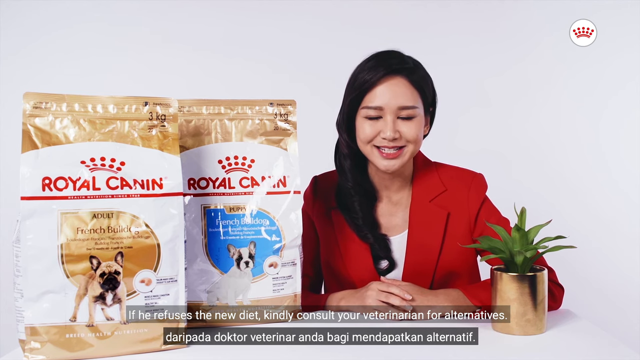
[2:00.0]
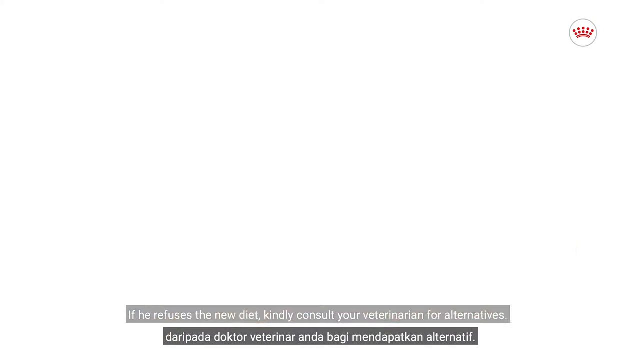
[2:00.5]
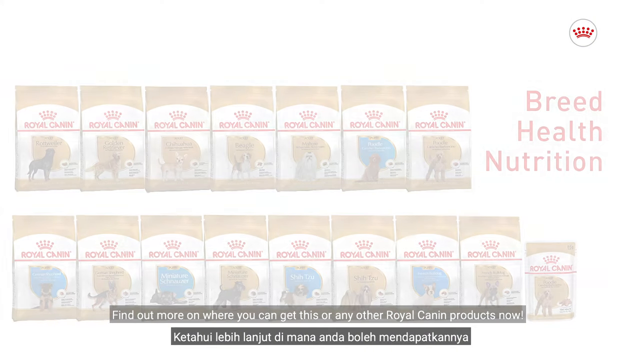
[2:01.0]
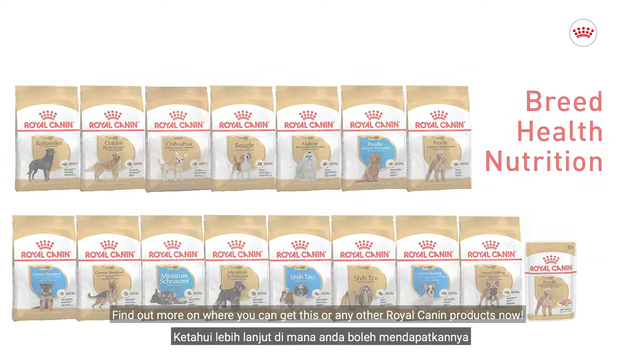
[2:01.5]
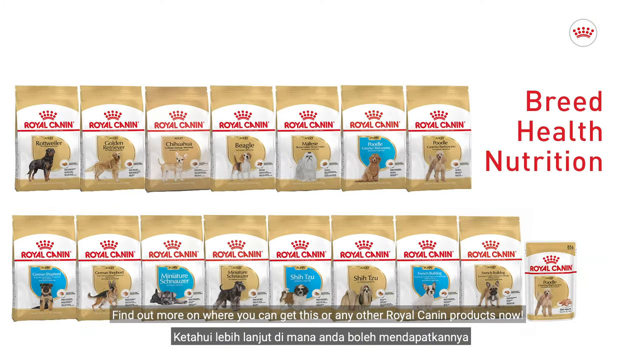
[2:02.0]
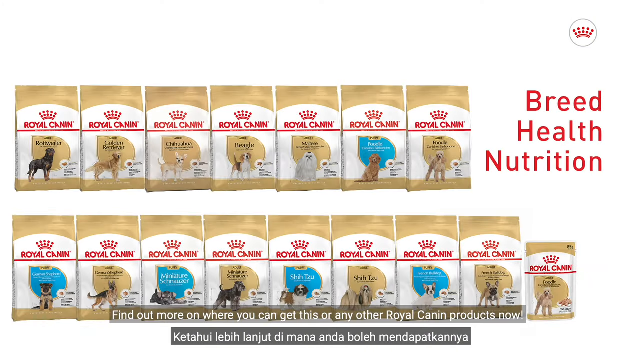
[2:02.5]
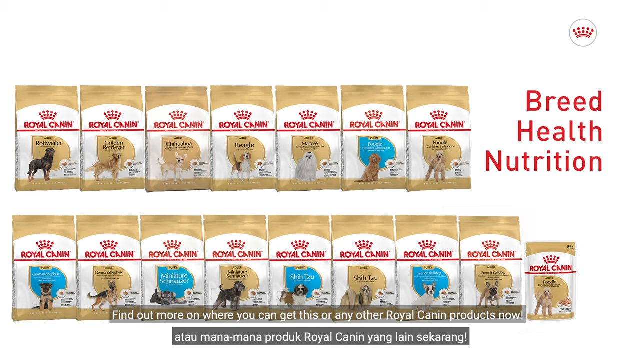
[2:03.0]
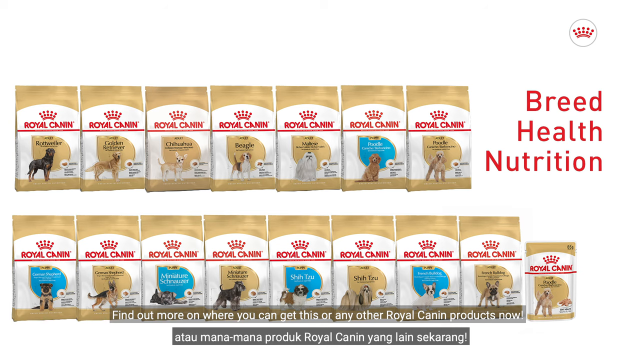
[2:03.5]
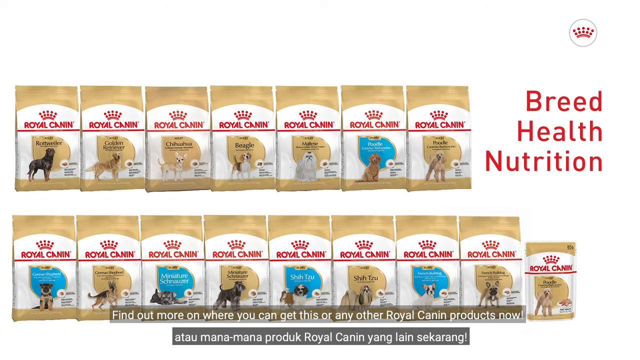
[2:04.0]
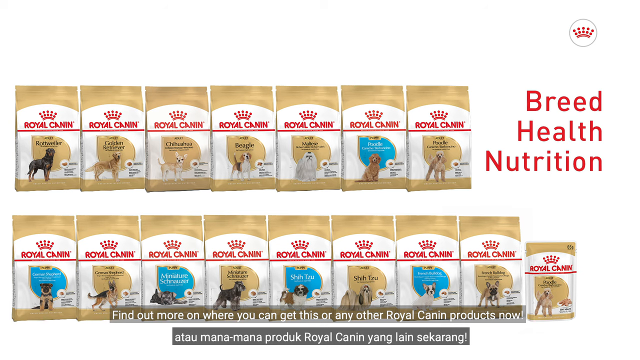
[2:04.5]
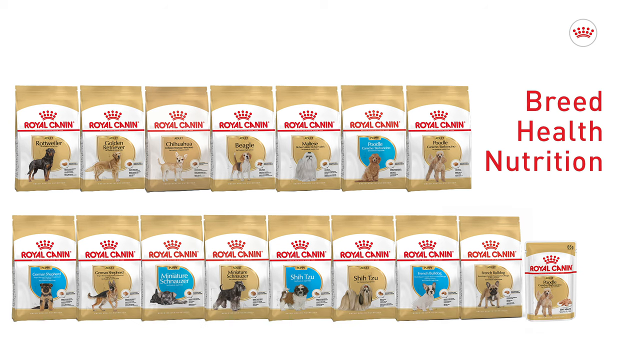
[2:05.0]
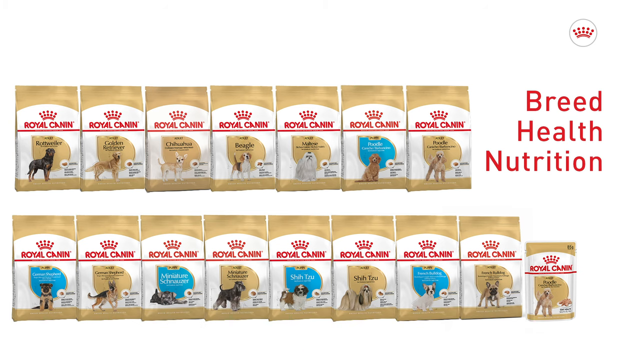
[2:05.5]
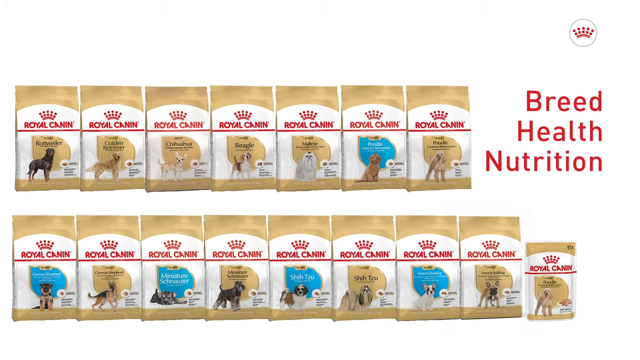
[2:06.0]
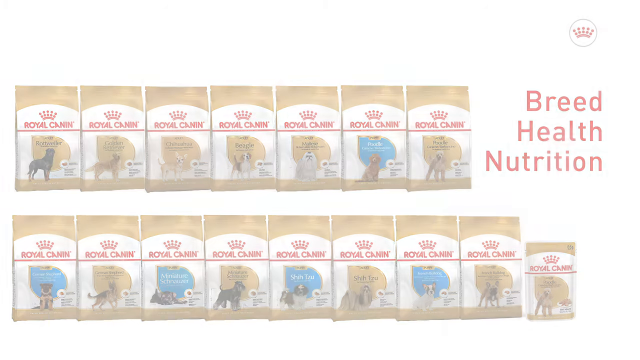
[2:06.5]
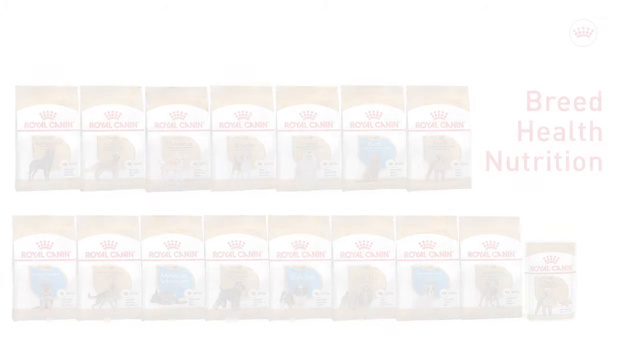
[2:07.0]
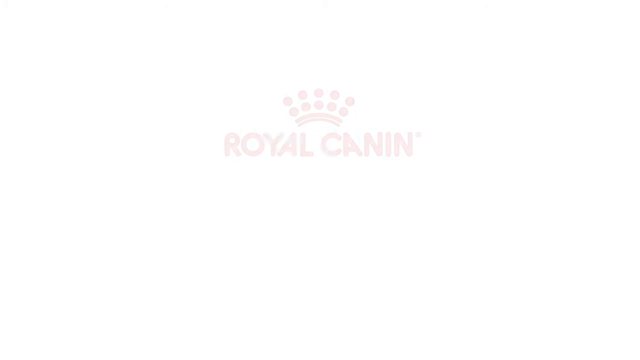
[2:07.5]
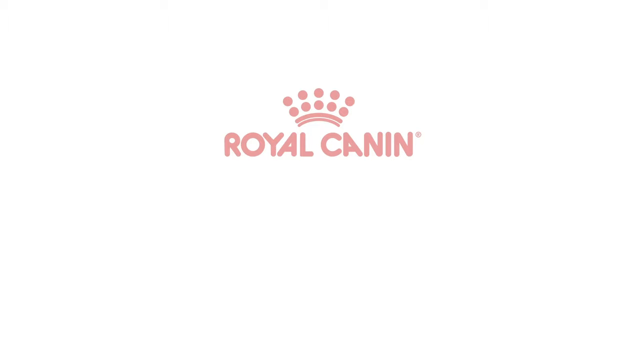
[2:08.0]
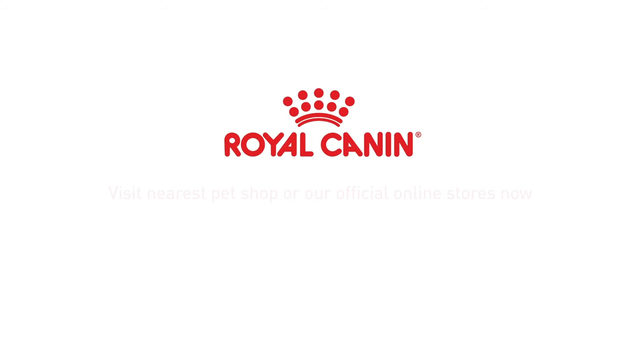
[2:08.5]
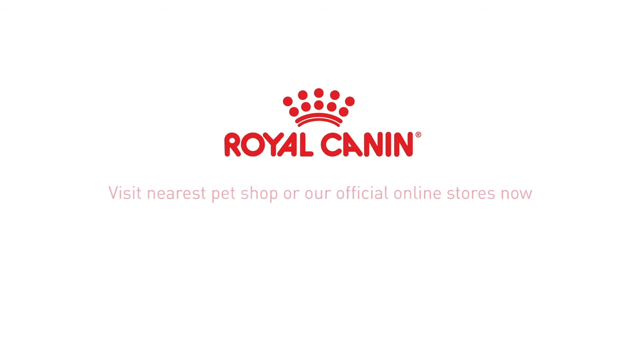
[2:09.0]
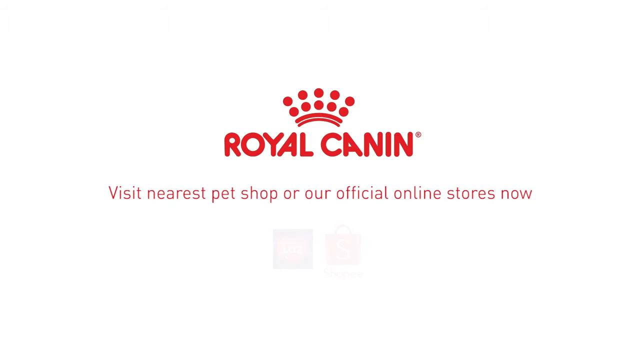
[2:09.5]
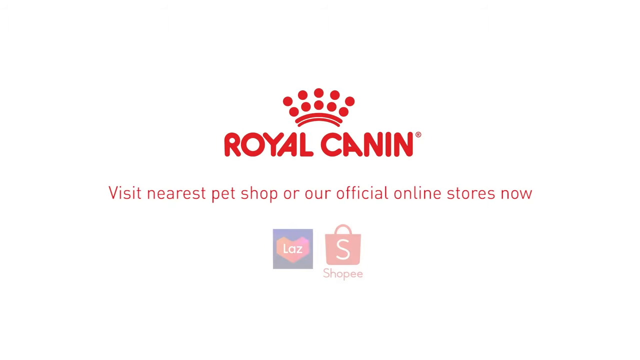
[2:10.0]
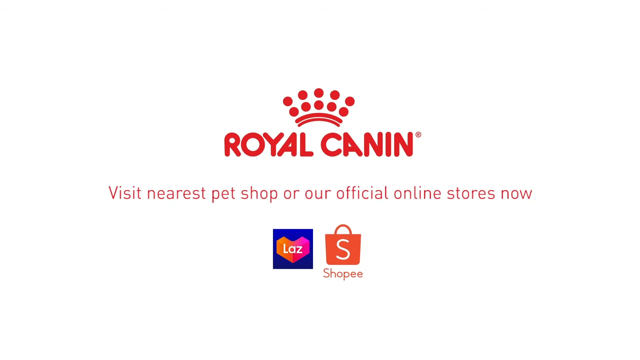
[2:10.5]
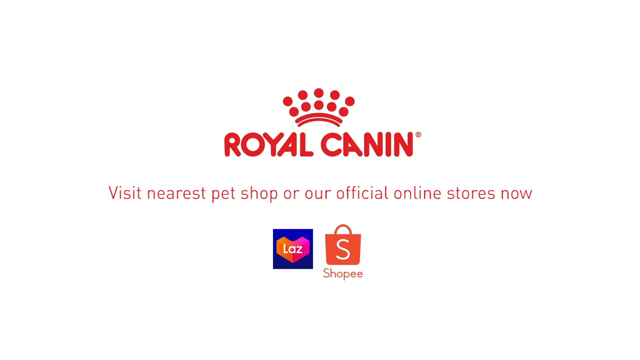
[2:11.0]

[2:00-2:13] An Asian woman smiles with two bags of dog food to her right on a table, resting her clasped hands on the table in front of her. She wears a red suit jacket with red lapels and a white shirt underneath. In front of her left forearm is a gold vase with a short potted plant in it. An array of dog foods is then shown: several different bags featuring different dog breeds on the front. To the right of this grouping, text says "Breed health nutrition".